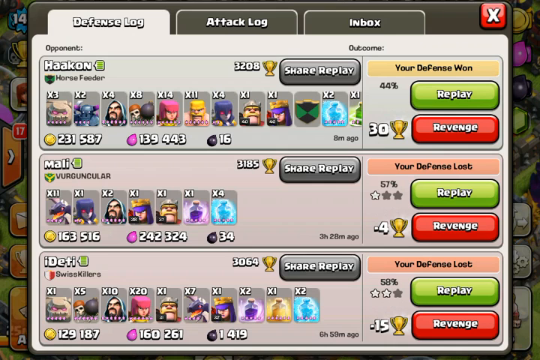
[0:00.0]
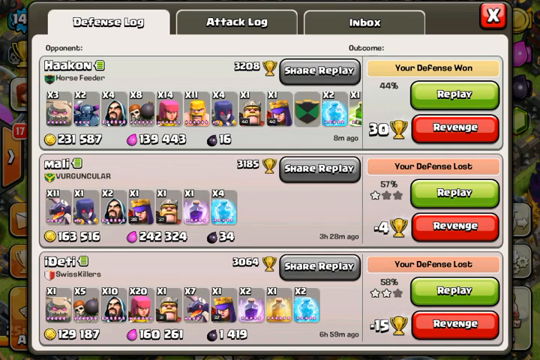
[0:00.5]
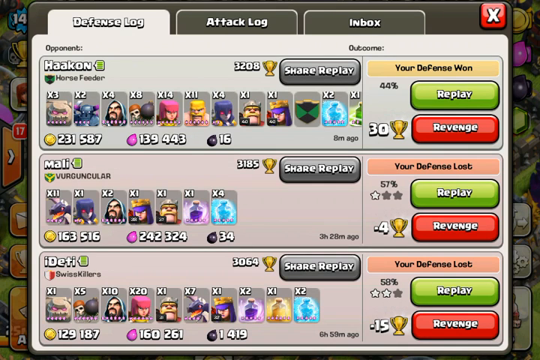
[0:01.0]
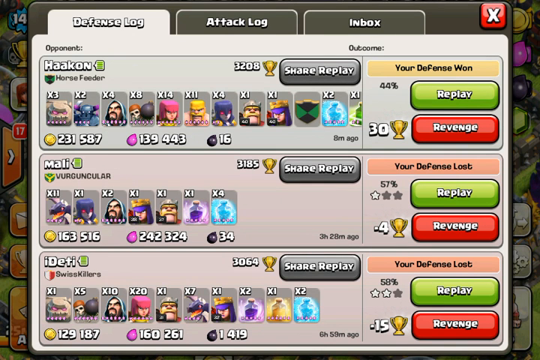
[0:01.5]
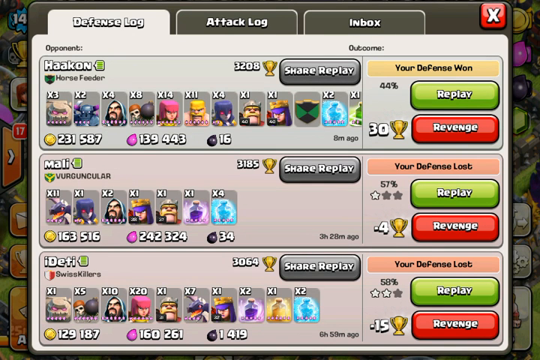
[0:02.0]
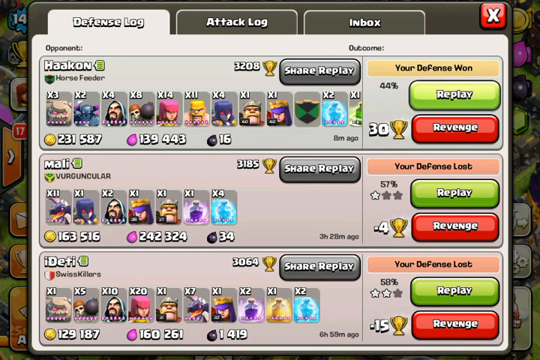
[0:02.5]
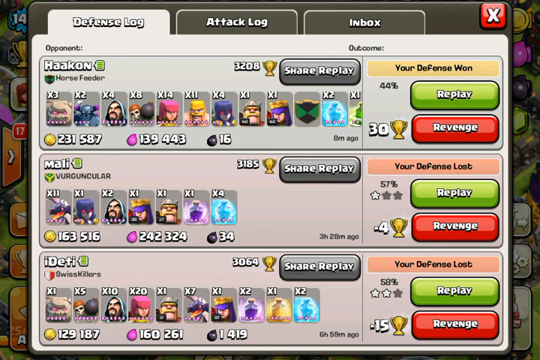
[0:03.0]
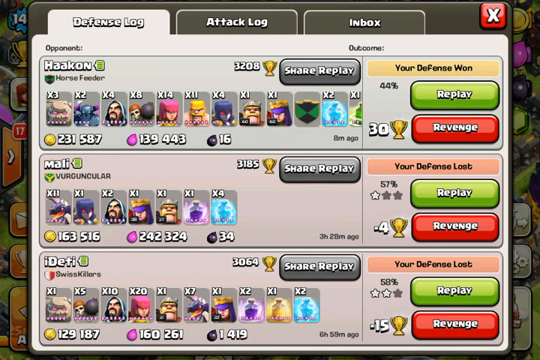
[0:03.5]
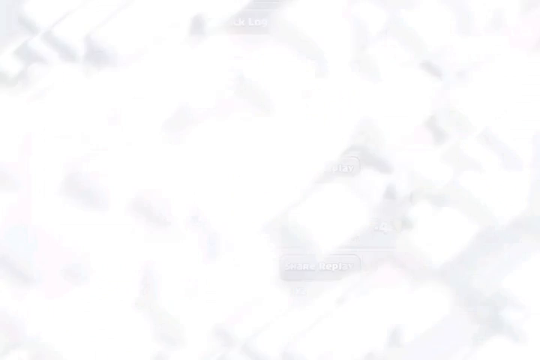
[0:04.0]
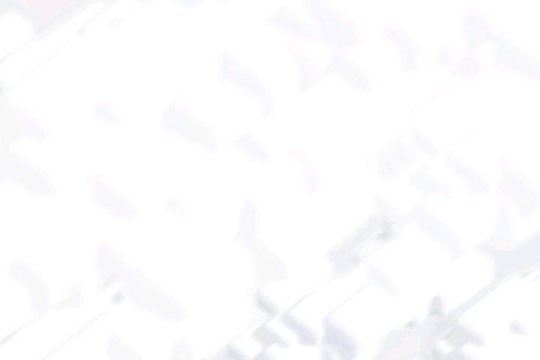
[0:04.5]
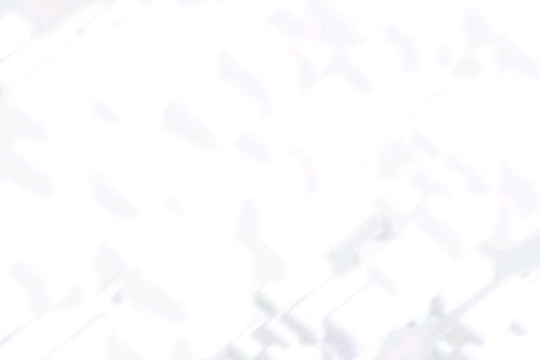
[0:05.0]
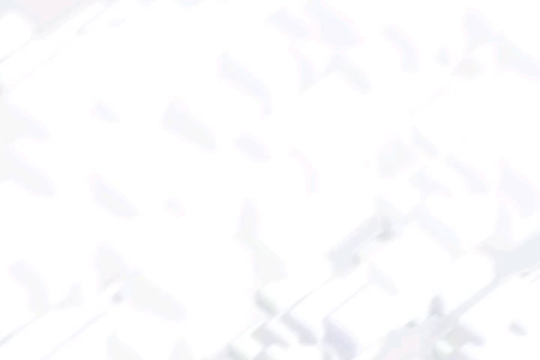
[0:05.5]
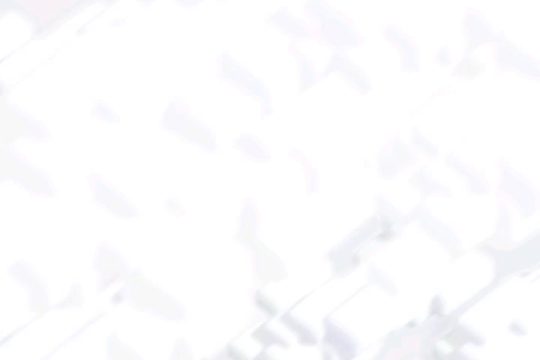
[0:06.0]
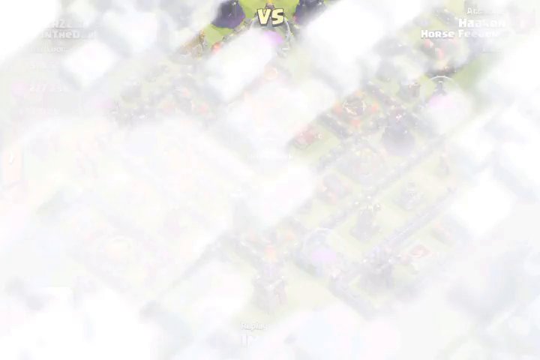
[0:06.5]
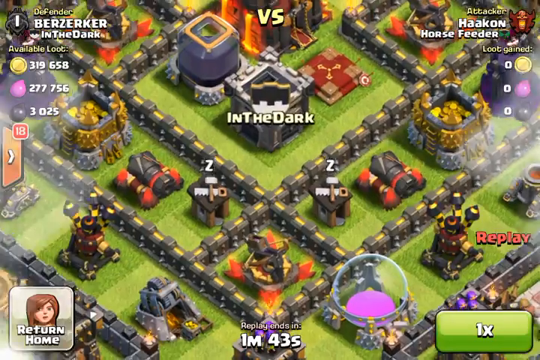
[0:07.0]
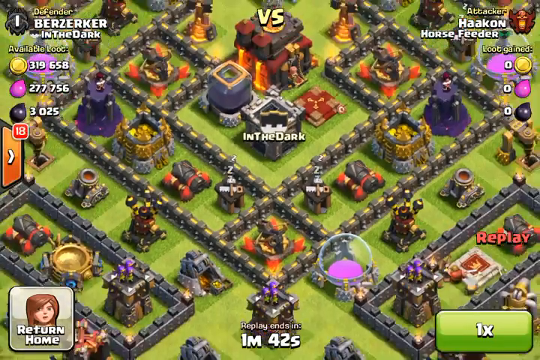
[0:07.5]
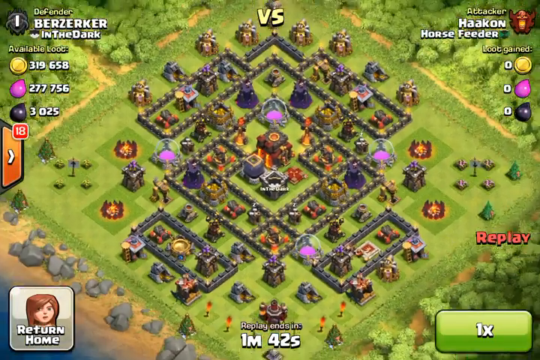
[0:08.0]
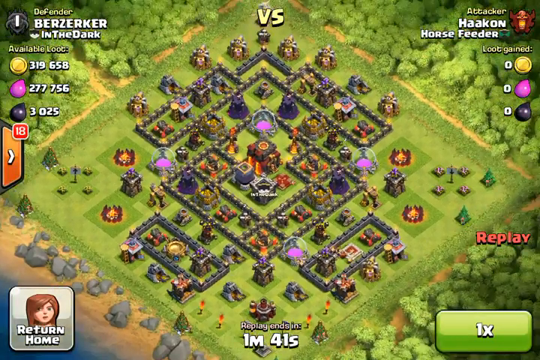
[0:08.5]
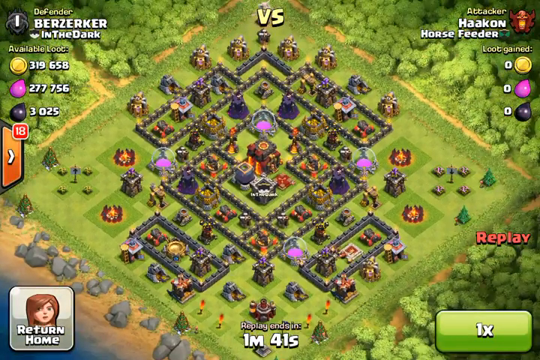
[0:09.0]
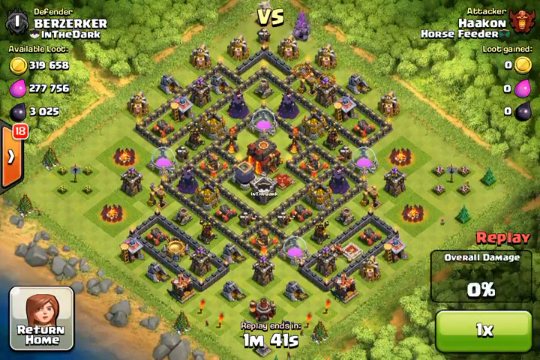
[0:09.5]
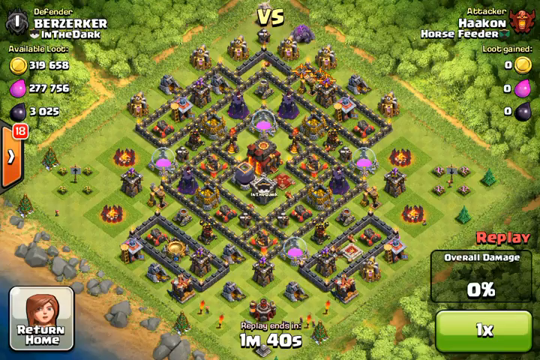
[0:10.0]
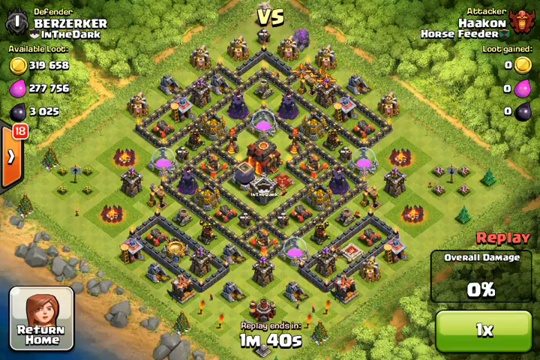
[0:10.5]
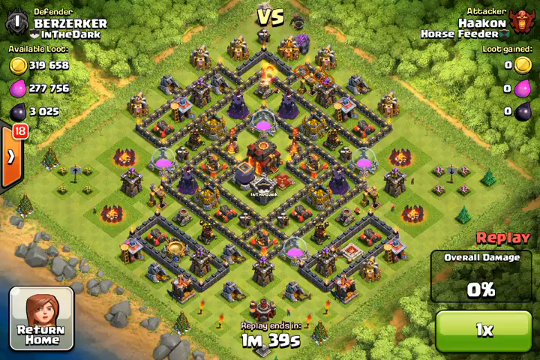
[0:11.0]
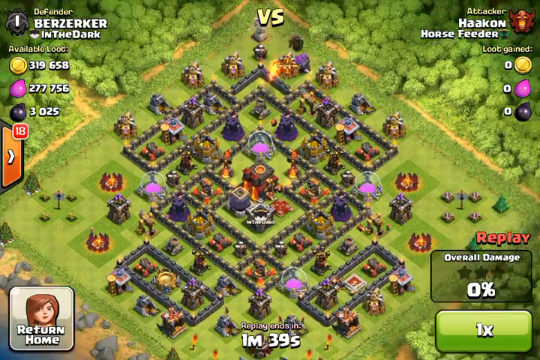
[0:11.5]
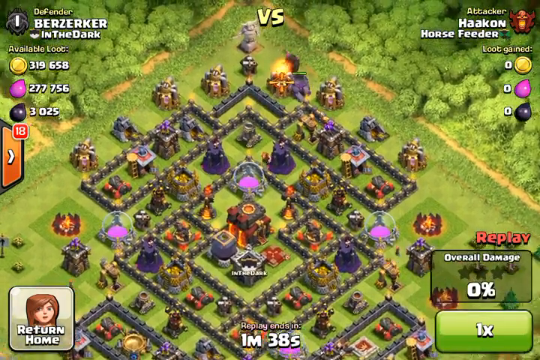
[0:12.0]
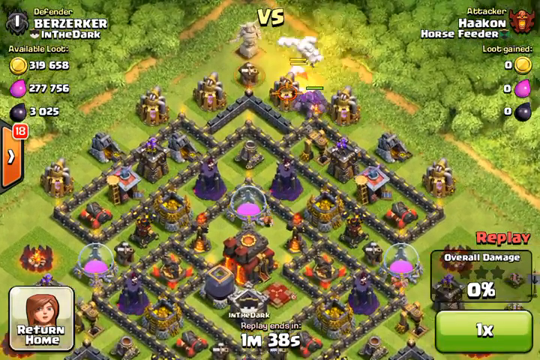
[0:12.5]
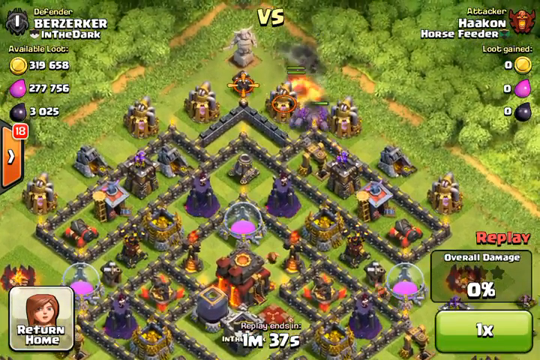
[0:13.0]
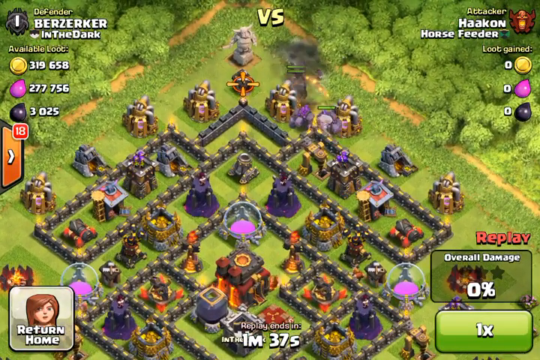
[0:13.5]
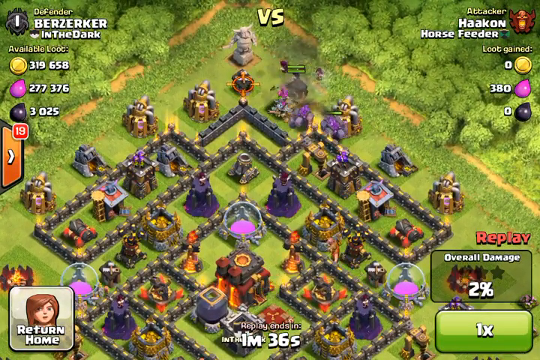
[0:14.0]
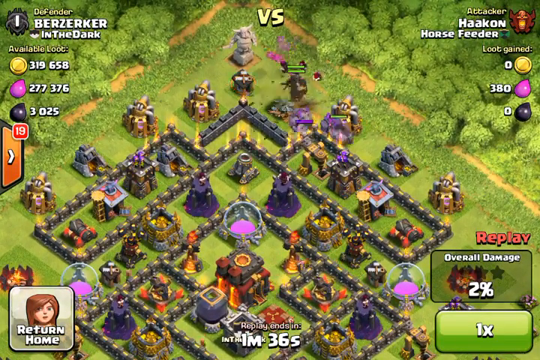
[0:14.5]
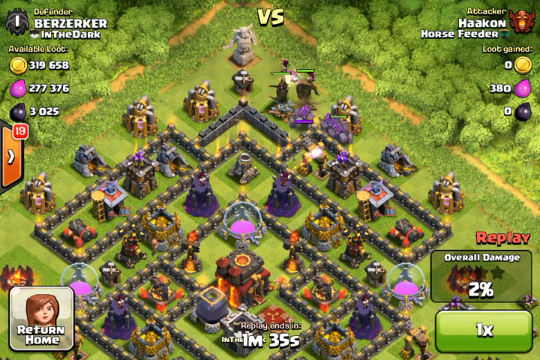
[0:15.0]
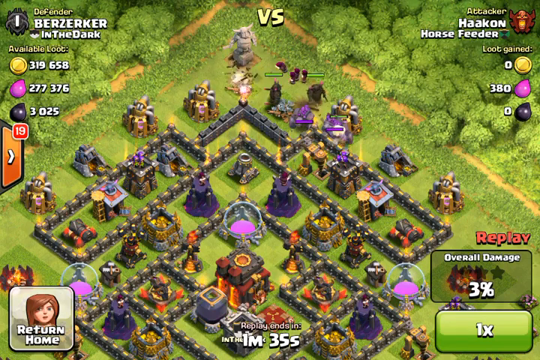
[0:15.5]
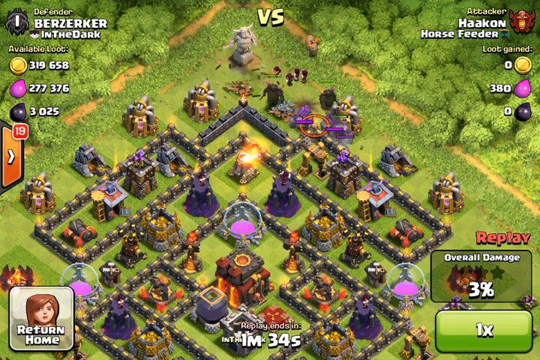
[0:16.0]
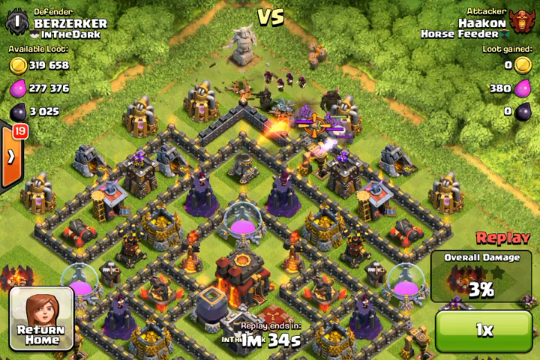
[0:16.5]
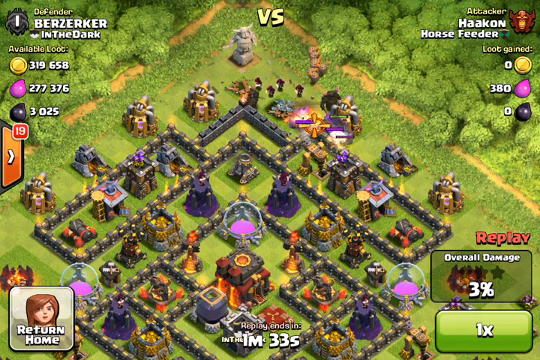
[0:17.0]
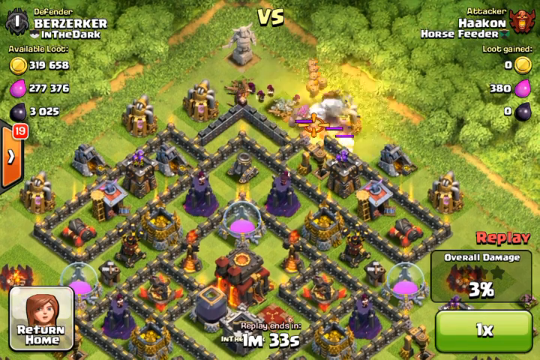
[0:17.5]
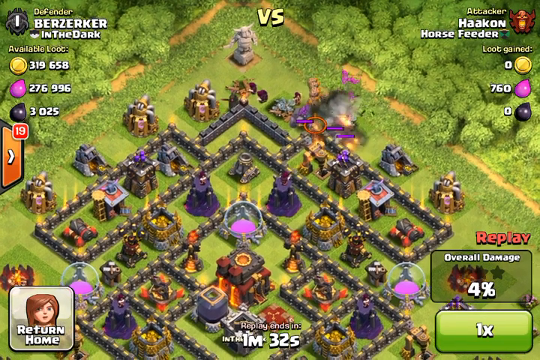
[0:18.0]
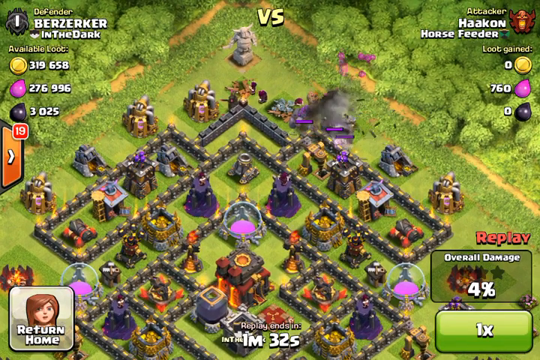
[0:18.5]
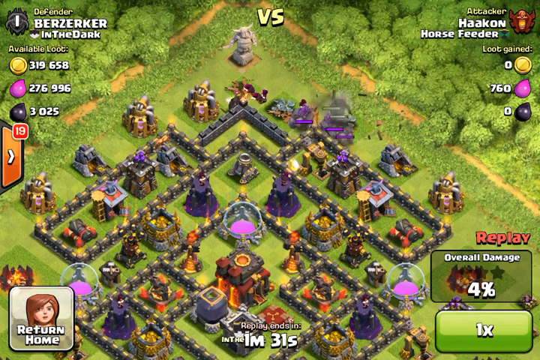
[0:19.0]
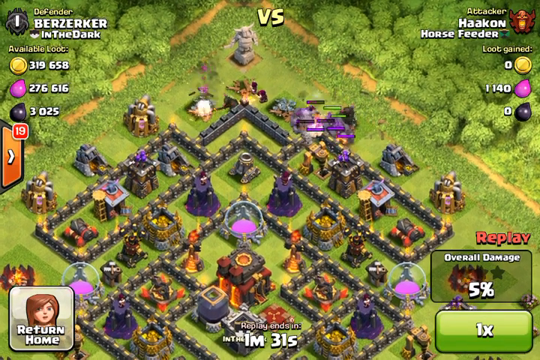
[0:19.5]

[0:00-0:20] What looks like a Clash of Clans game is on screen, apparently showing the defense log. Three tabs are highlighted, but only one is shown: the defense log, which lists various players, apparently three of them. Their gamertags are visible, and underneath one person's name is "Horse Feeder." On the other side is "Share Replay," followed by a replay button, and each of these is in its own section. The screen then turns into a cloud and moves to an overhead view of what looks like a fortified city under attack. There is a defender and an attacker; the defender is Berserker. The two go head-to-head, with only two head-to-head spots visible so far. In the bottom left corner is "Return Home" with the character picture of a woman, and on the right side other statistics appear as the battle goes on.